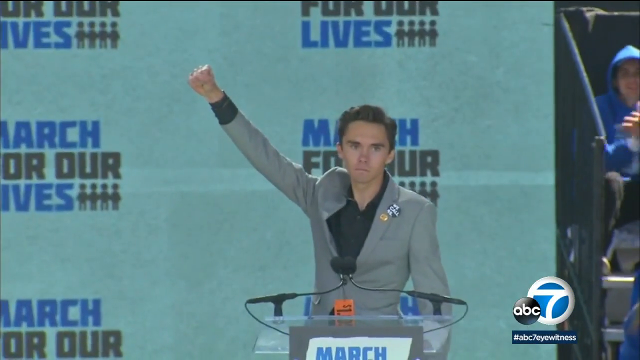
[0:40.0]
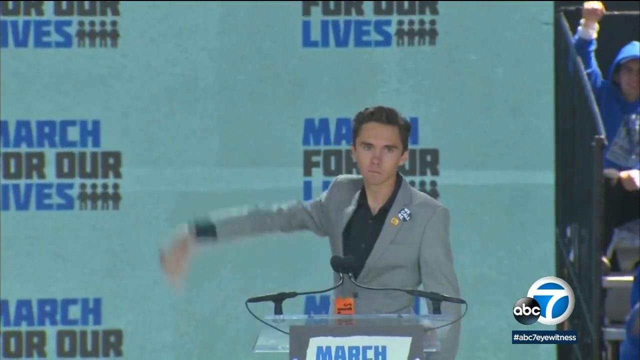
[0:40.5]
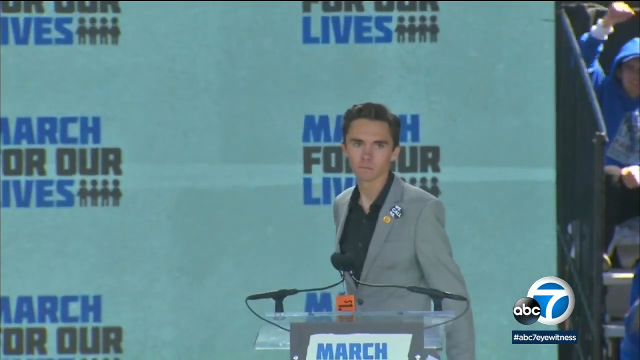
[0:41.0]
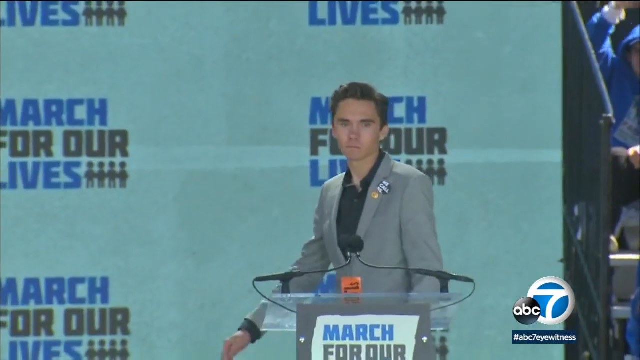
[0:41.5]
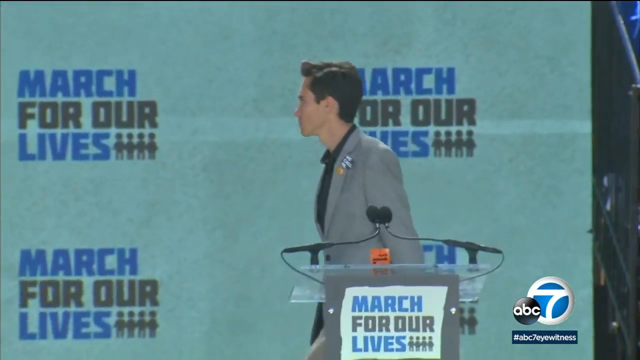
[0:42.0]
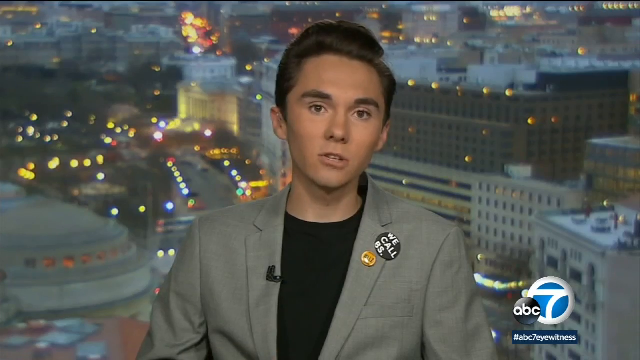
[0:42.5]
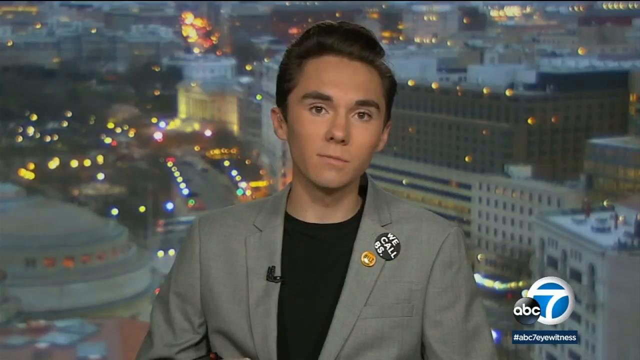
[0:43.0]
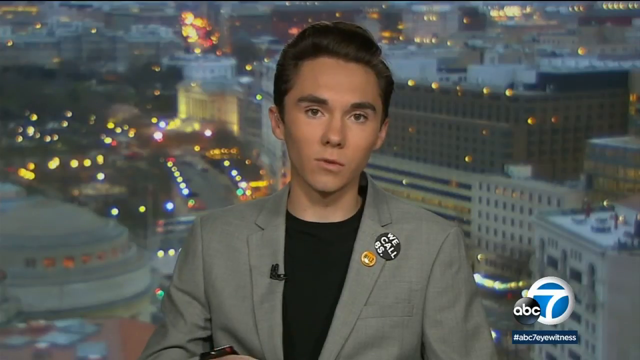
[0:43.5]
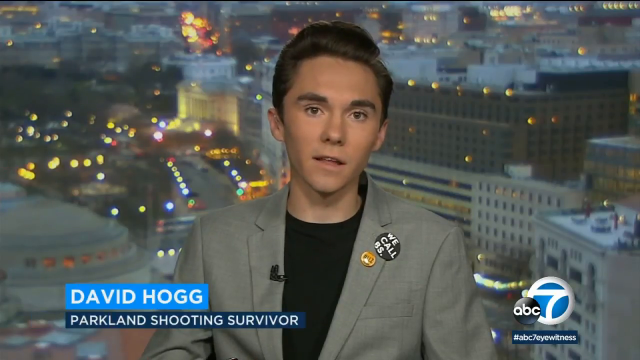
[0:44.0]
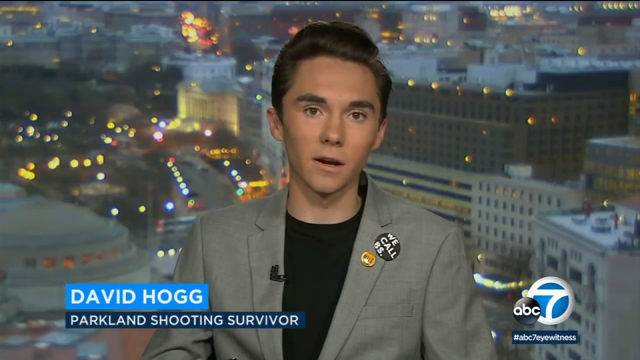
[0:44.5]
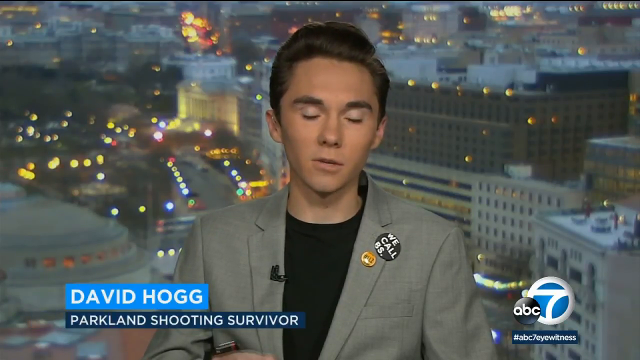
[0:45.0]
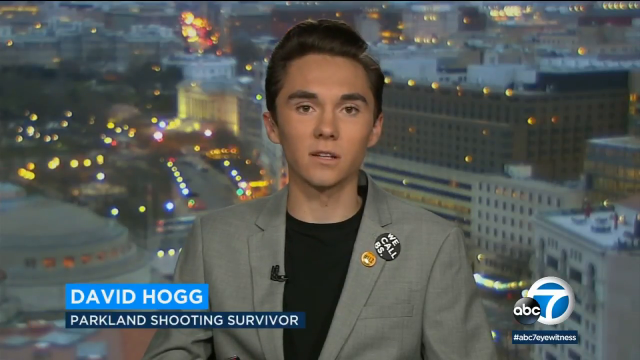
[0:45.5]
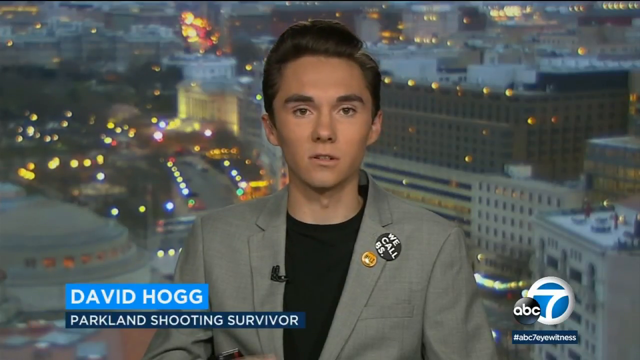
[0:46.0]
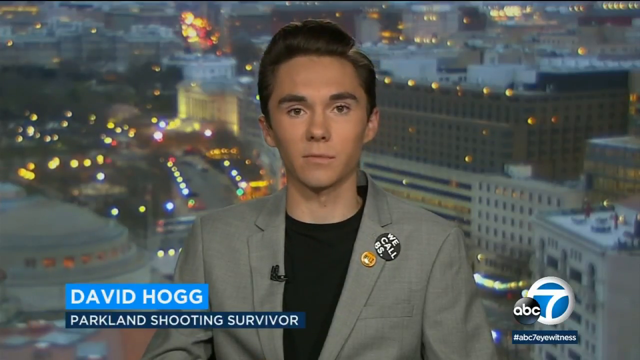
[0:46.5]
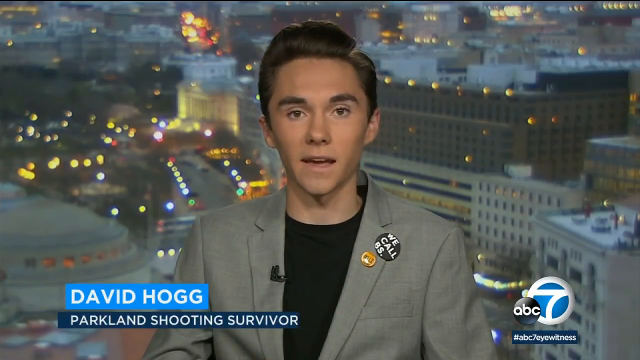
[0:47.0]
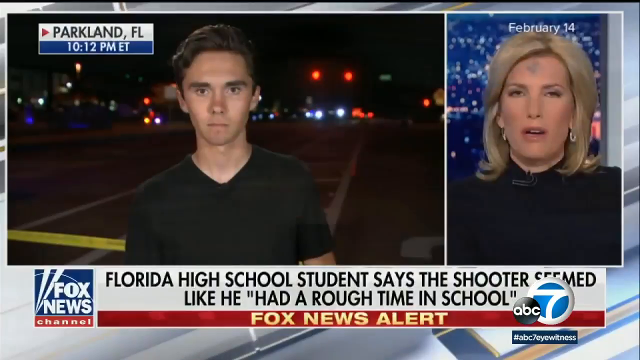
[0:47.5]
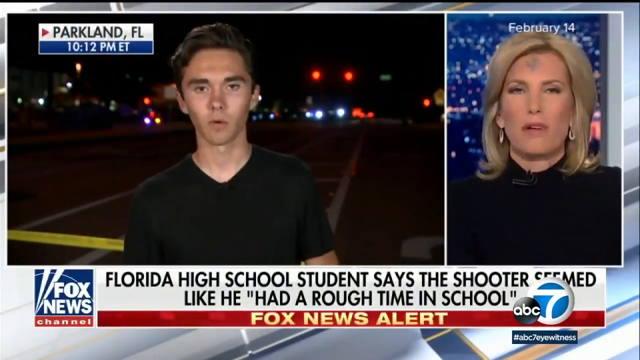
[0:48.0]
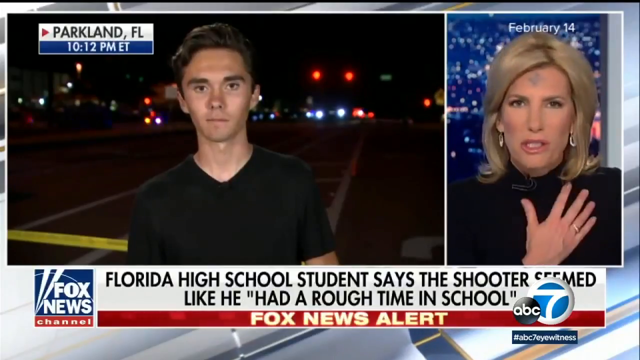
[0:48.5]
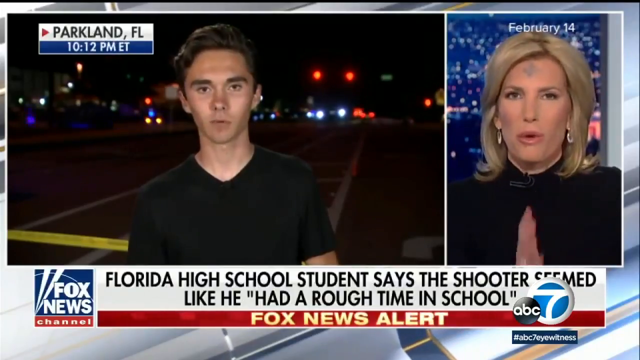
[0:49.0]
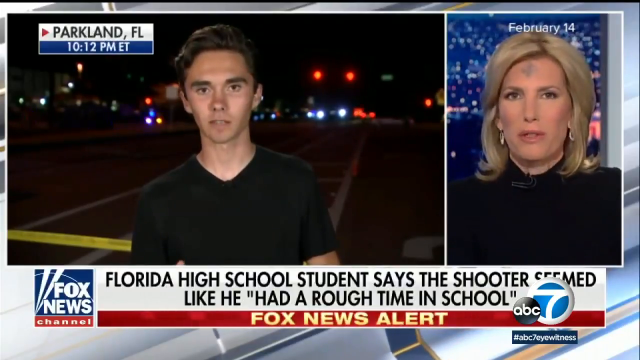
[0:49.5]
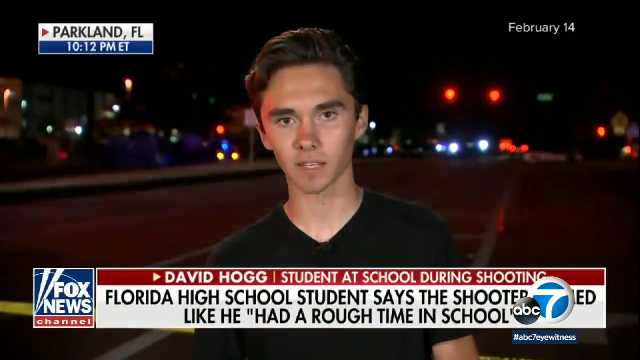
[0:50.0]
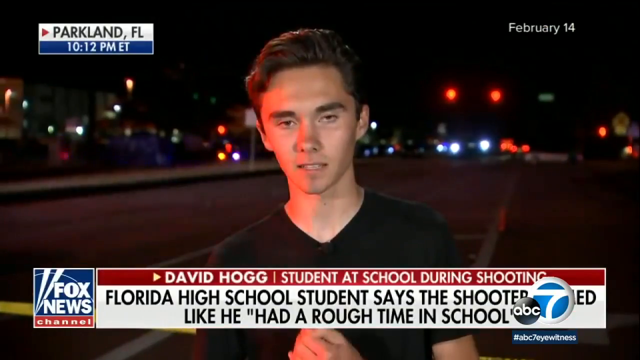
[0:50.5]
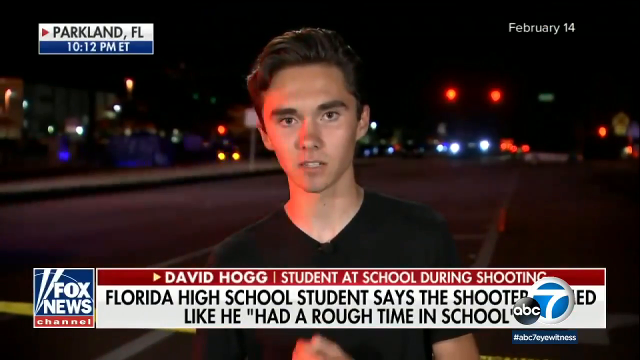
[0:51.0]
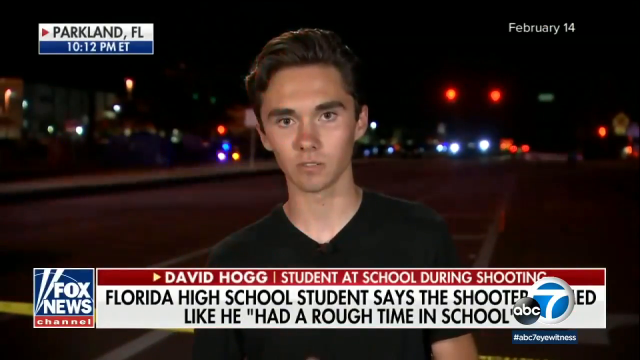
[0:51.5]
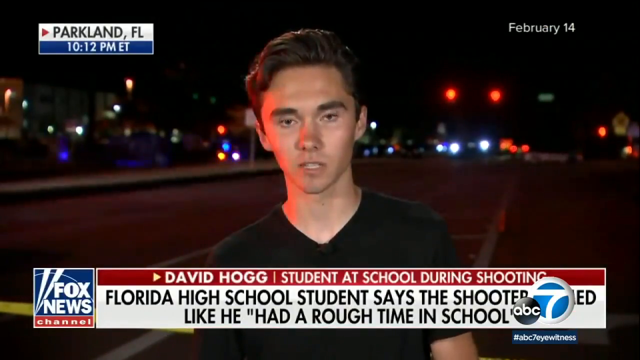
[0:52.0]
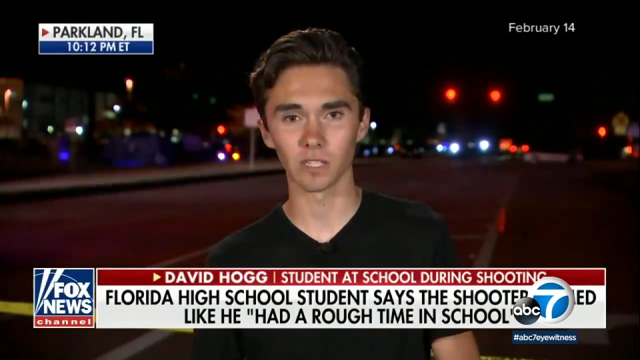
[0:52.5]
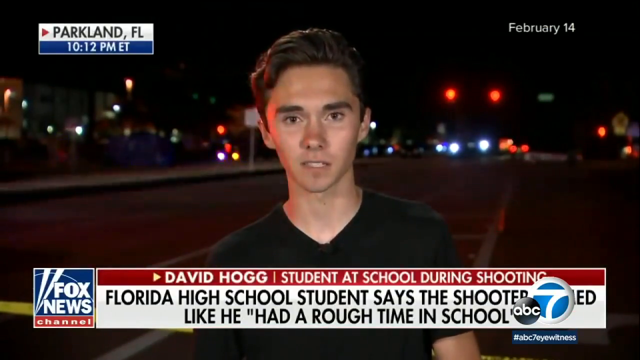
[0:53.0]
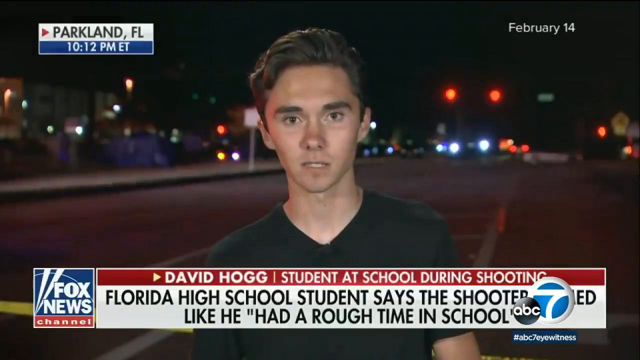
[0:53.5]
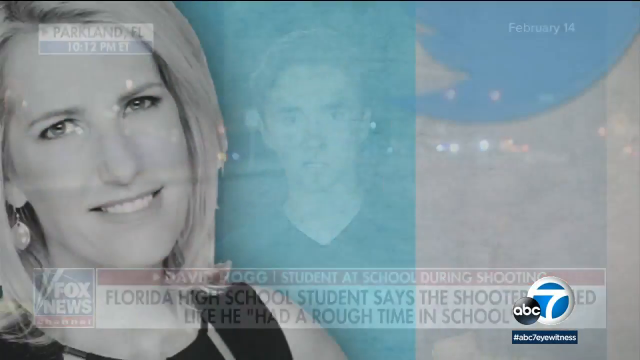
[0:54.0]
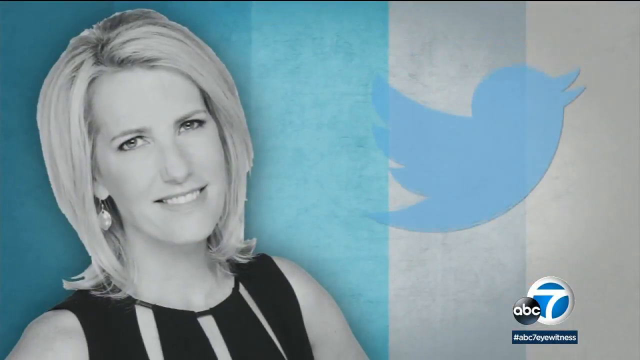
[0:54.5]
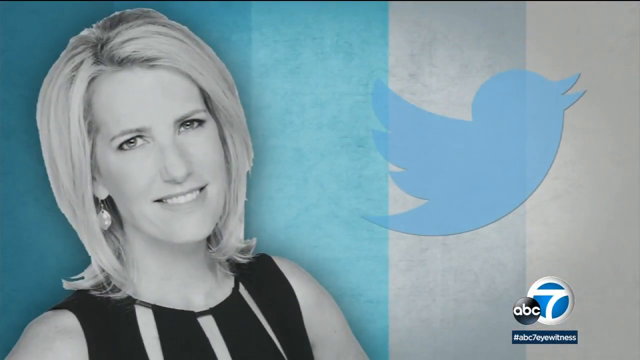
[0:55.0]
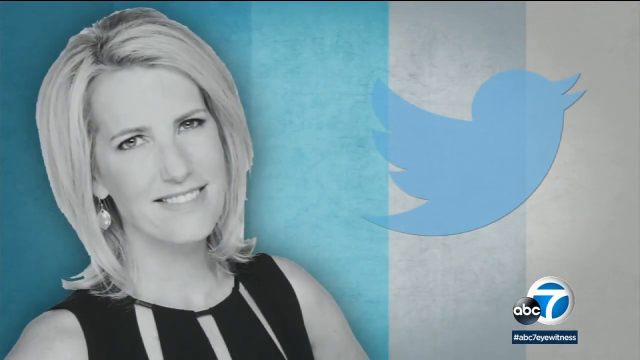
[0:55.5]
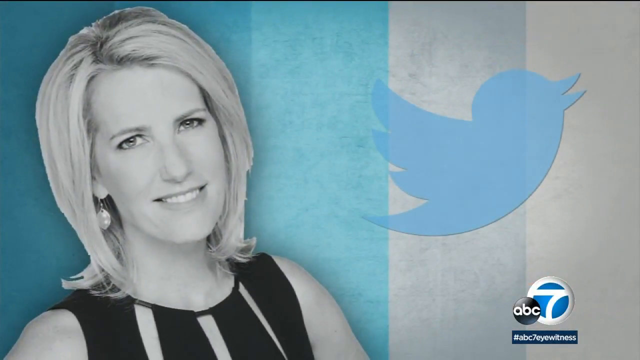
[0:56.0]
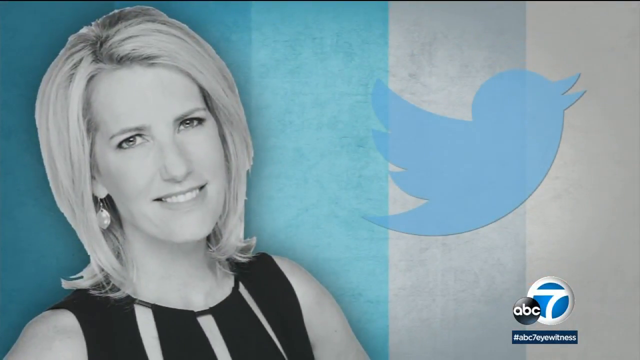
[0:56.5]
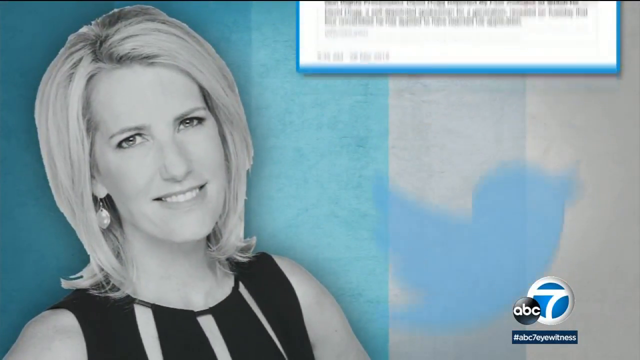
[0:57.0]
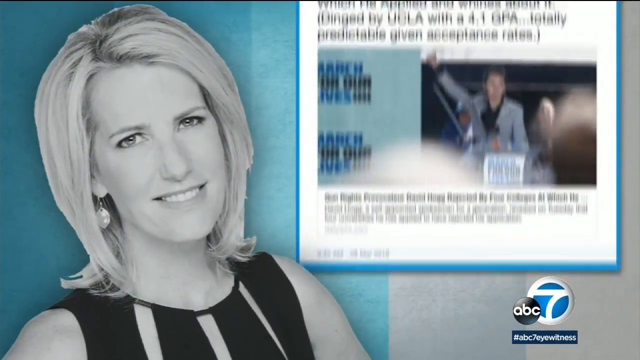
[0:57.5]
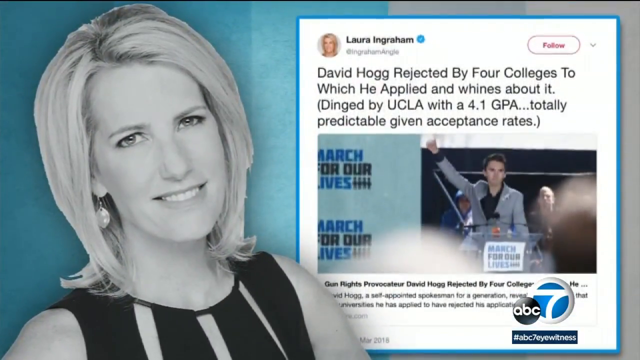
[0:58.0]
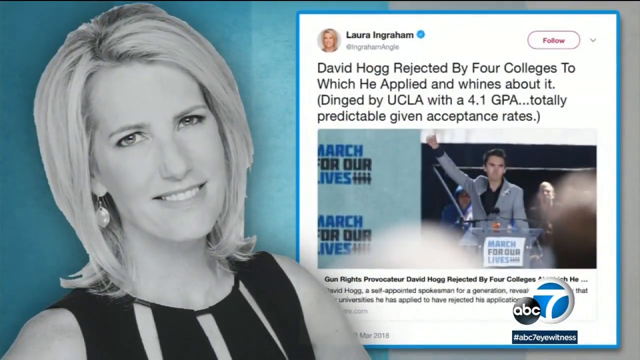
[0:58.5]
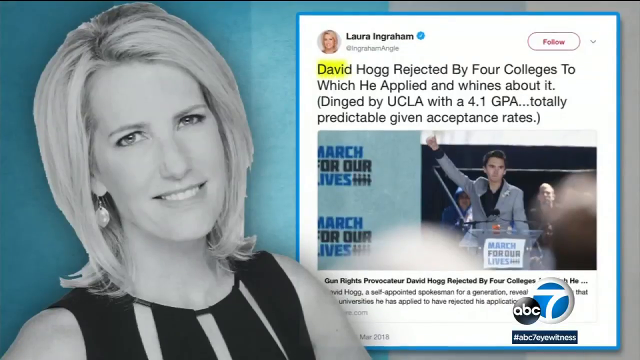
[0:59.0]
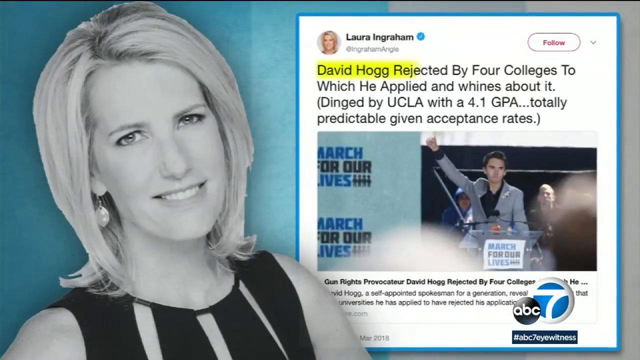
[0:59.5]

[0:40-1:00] A man, David Hogg, a Parkland shooting survivor, is shown wearing a brown suit over a black t-shirt with writing on it. He has brown hair. Behind him, a screen shows different places at night. Next, he is shown without the suit, only in a T-shirt, alongside a lady in a black dress with gold hair. On-screen text reads "Florida High School student says" and "Fox News Alert". They are reporting the news live, and David seems like a student. Then a picture of the woman in the black dress with gold hair and earrings is shown with a Twitter logo, and a color changes.